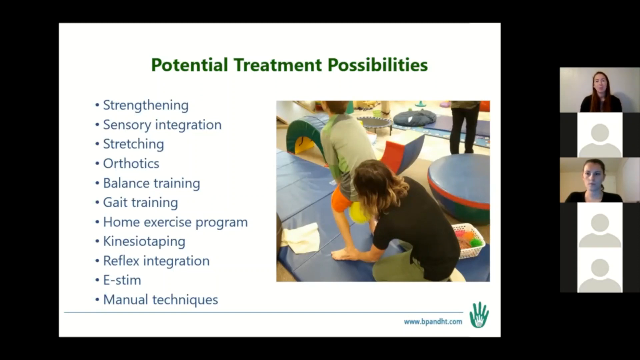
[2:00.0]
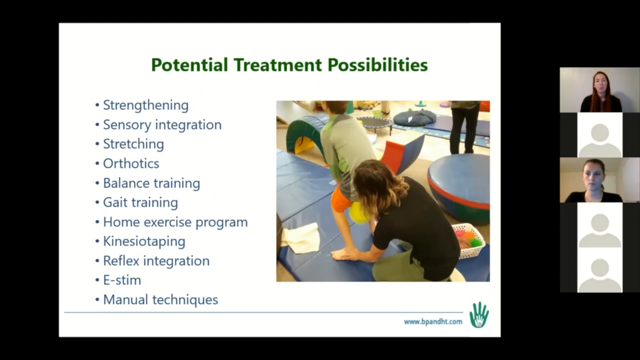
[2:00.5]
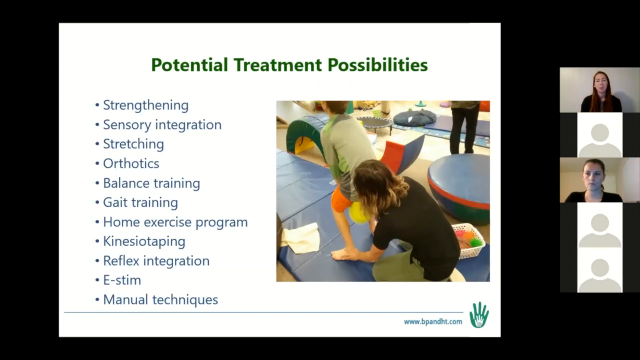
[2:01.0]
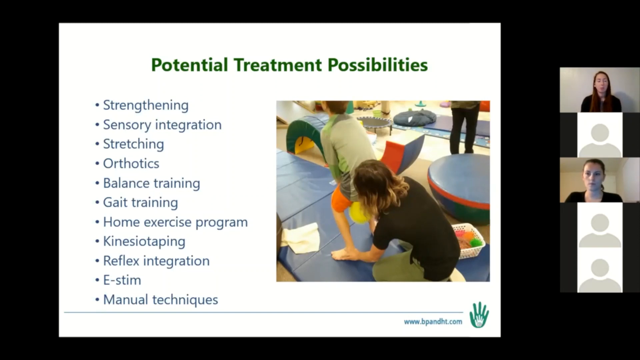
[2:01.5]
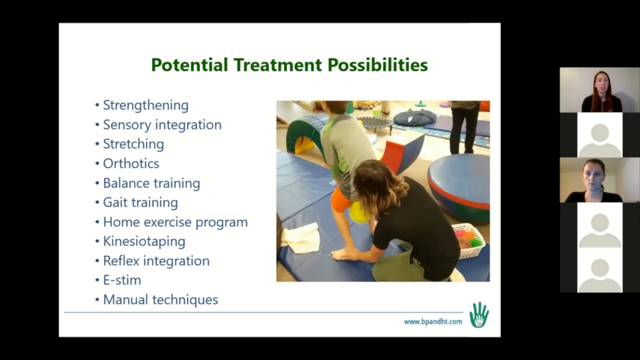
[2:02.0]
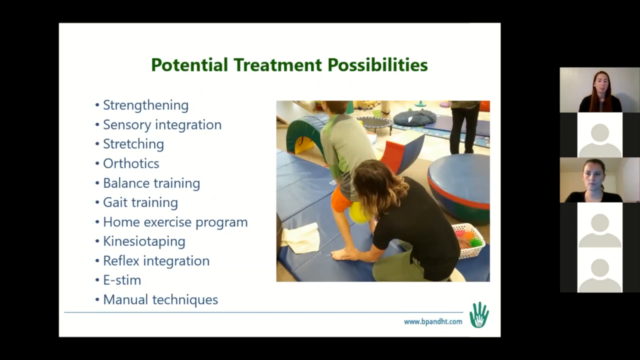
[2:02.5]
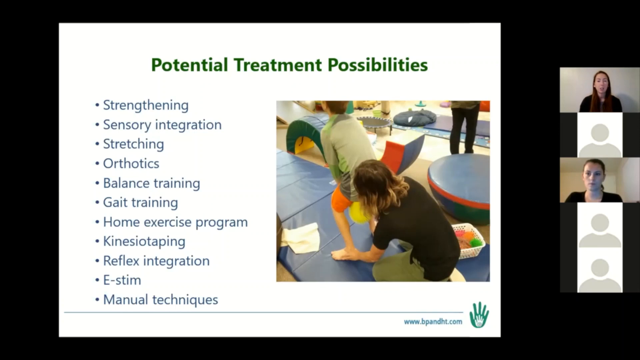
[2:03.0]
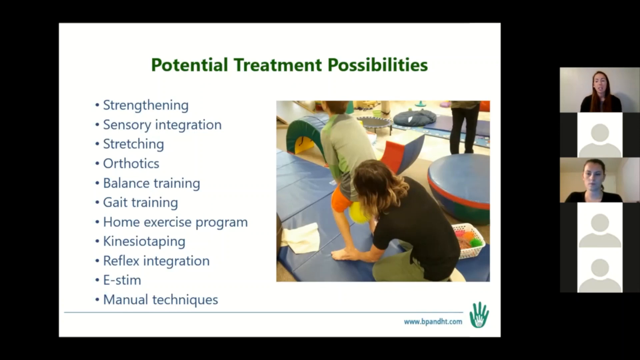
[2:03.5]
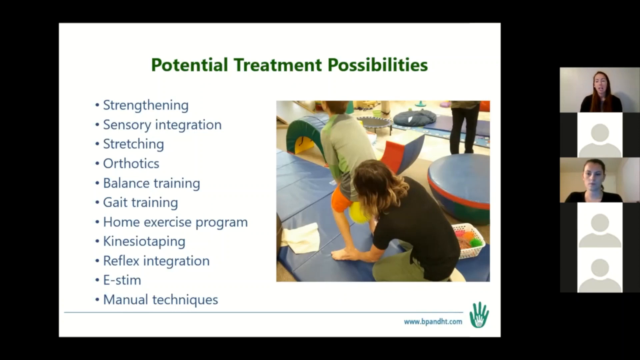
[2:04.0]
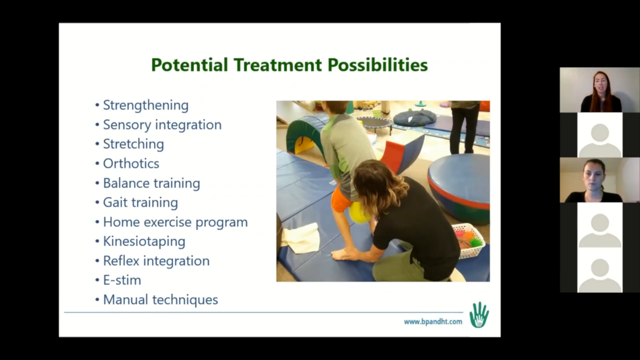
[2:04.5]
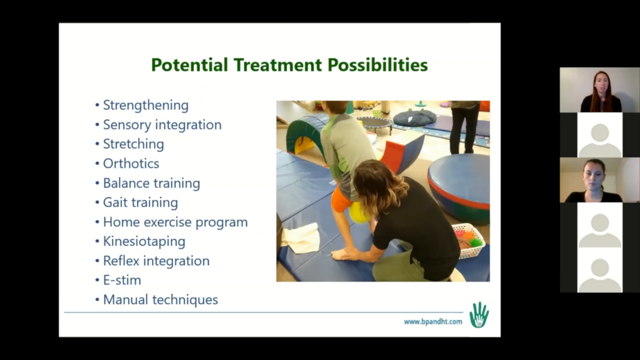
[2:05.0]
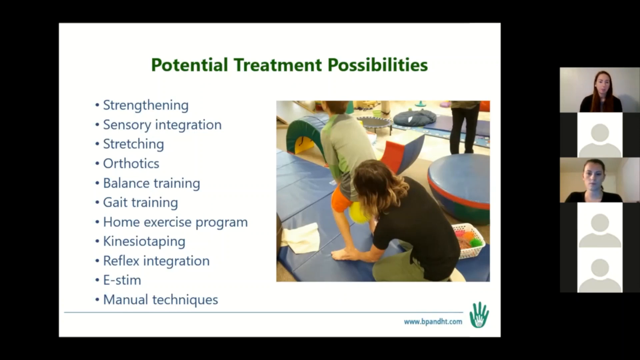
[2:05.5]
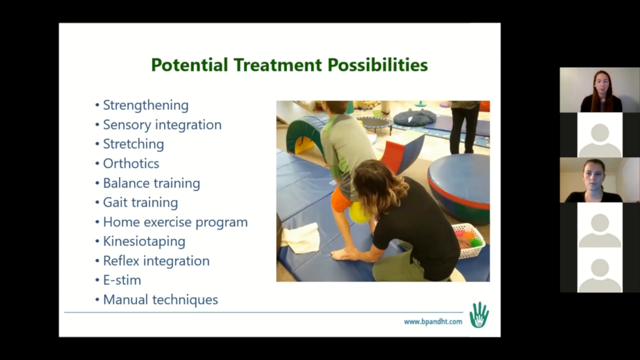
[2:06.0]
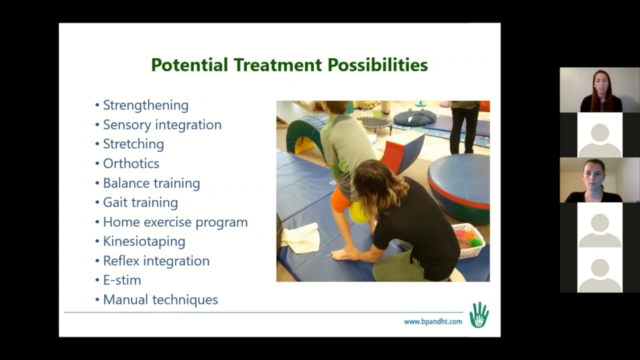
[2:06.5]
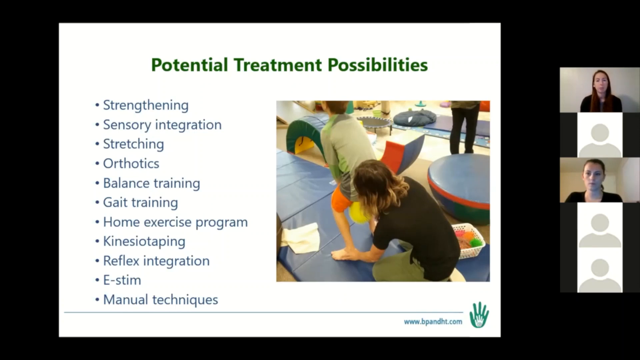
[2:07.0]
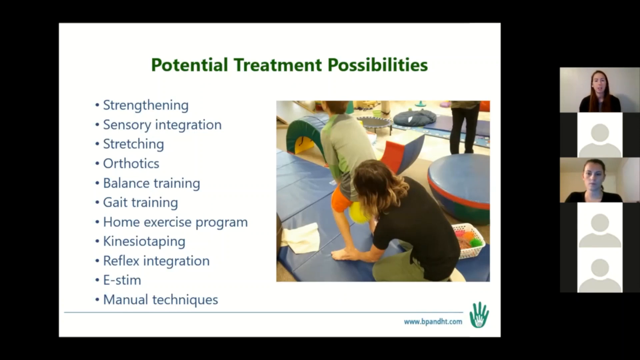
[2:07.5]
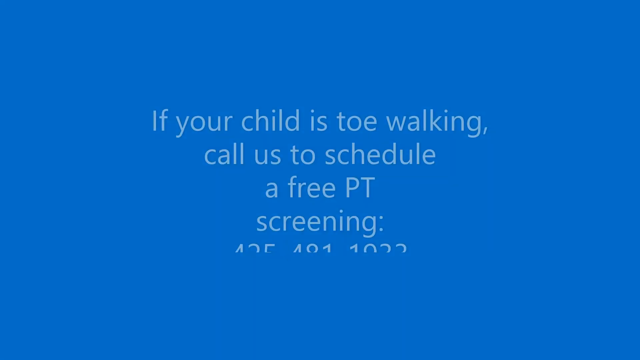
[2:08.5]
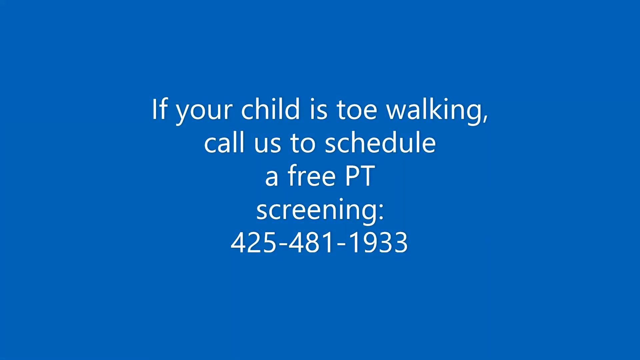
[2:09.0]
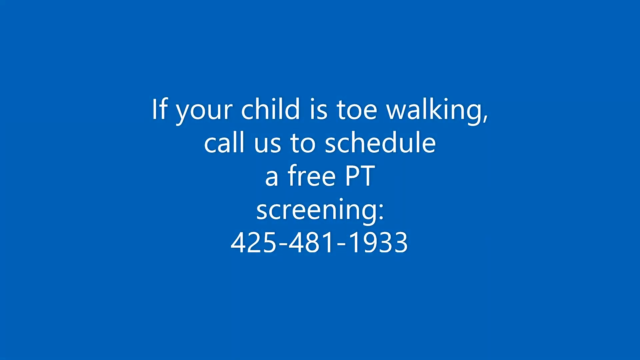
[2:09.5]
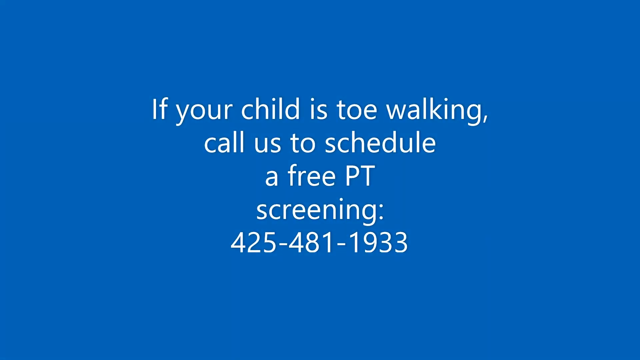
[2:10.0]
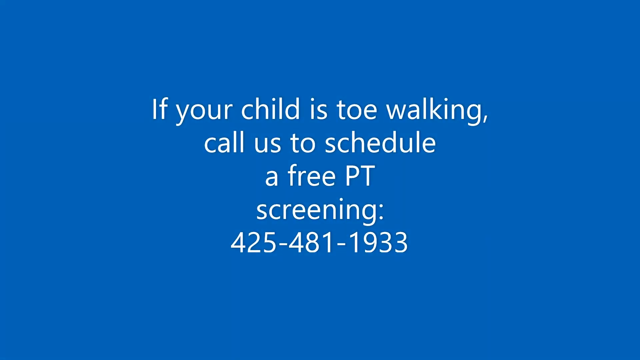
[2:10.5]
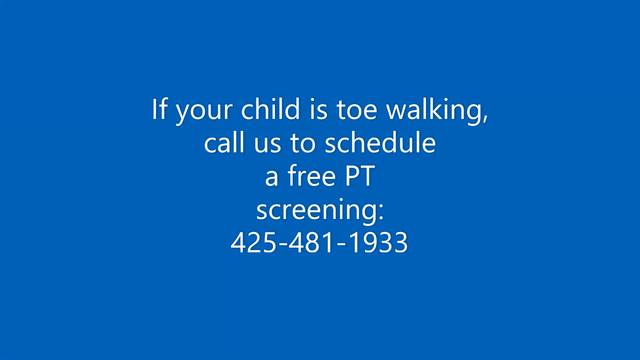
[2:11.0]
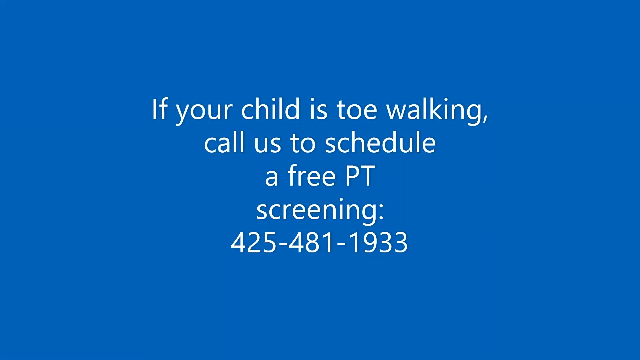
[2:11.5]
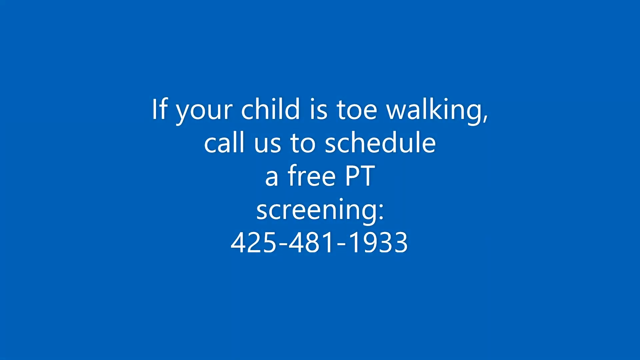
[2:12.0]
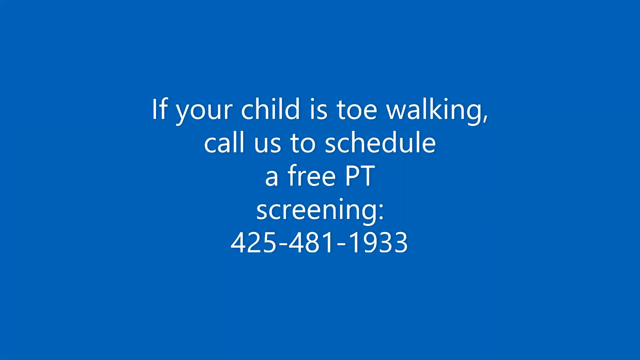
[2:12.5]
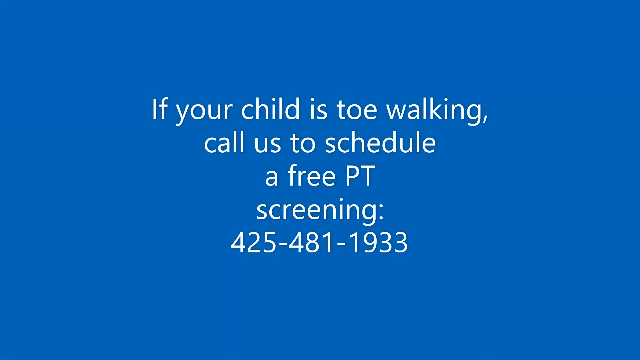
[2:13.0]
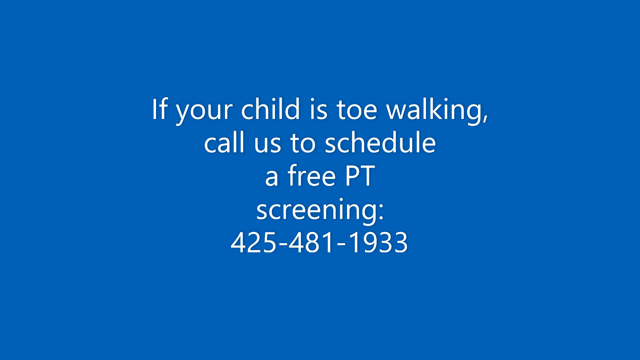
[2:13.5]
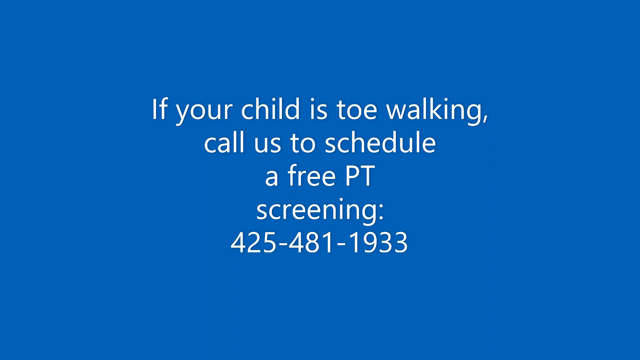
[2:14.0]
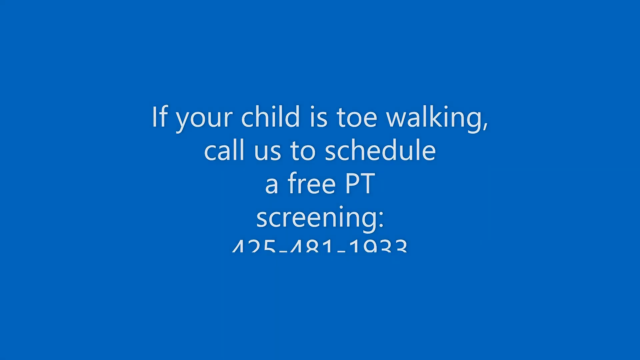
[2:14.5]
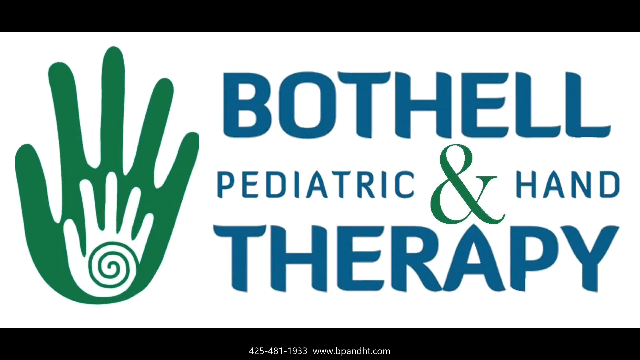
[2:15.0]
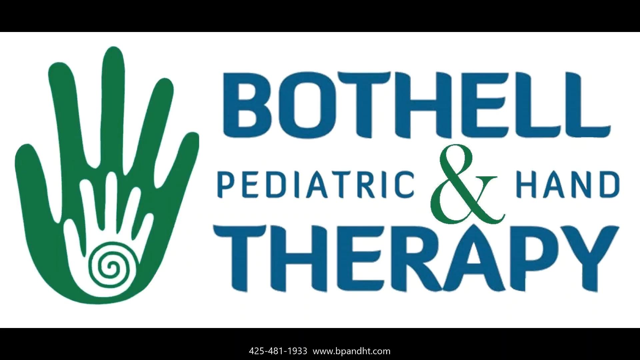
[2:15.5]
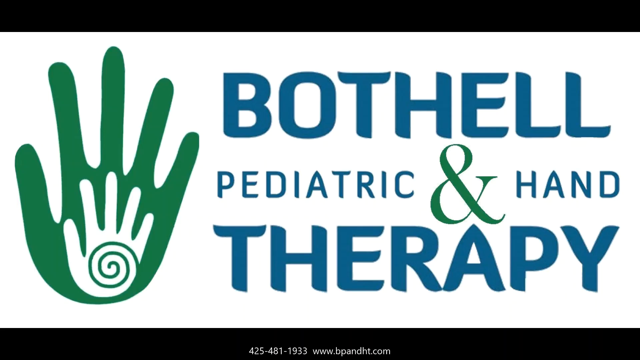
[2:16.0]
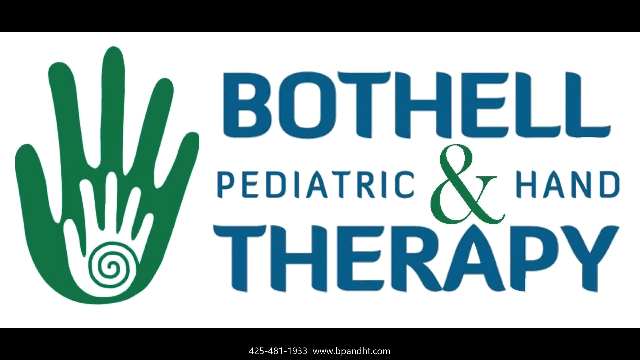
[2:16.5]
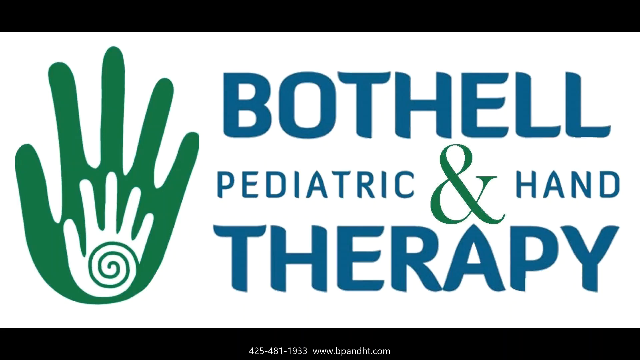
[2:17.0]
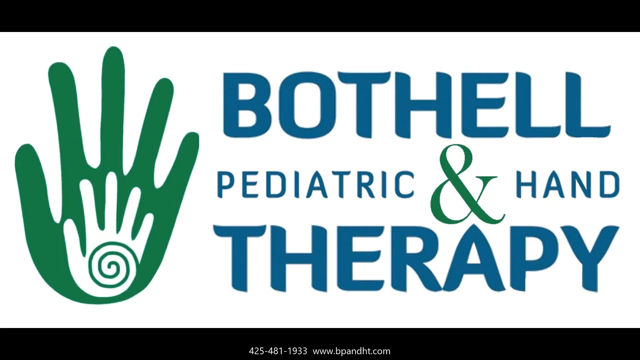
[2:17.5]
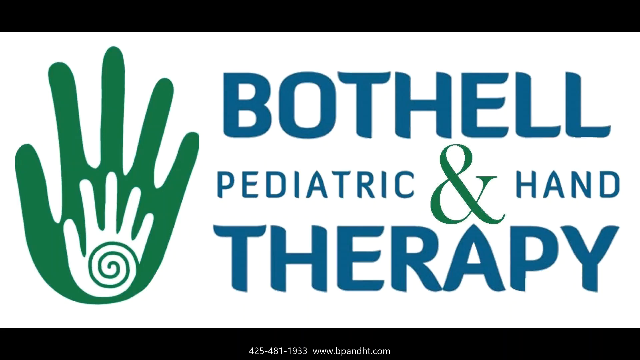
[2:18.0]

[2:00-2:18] The live video conference continues on the screen, with participant avatars arranged vertically along the right side and a black background. A slide with a white background occupies most of the screen, headed "potential treatment possibilities", with a colorful image on its right side of a woman kneeling beside a boy standing on a blue mat; his knees are bent, she is touching his ankles from behind, and other colorful items are on the ground beside the mat. The slide and the video conference then disappear from the screen, which turns blue, with white text across it reading "if your child is still walking, call us to schedule a free PT screening 425-481-1933".